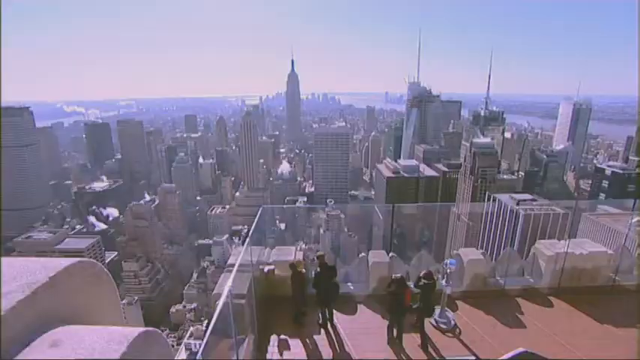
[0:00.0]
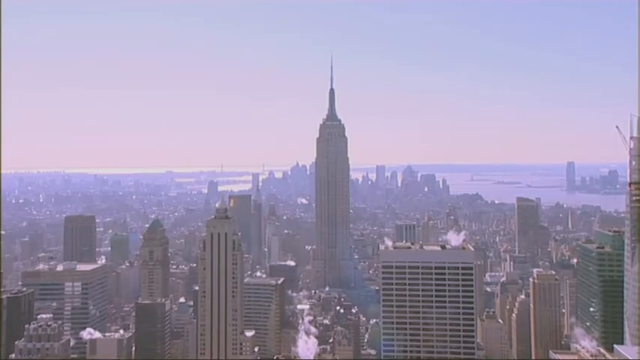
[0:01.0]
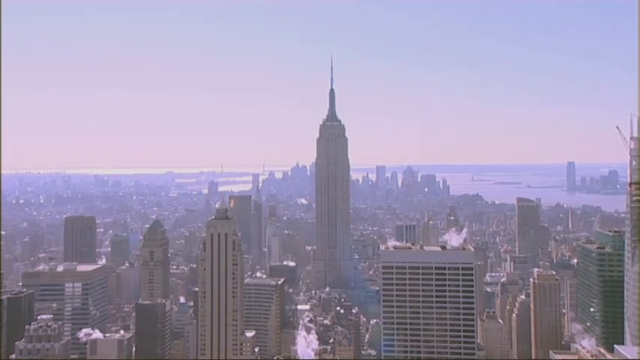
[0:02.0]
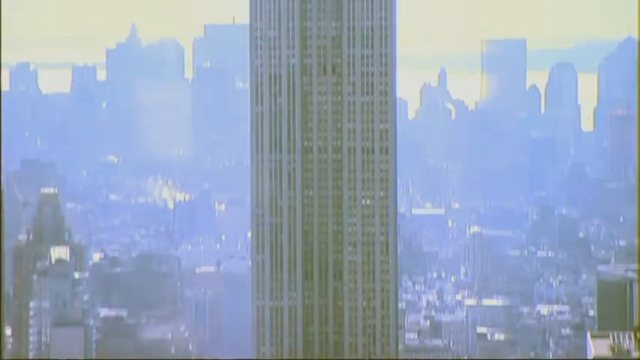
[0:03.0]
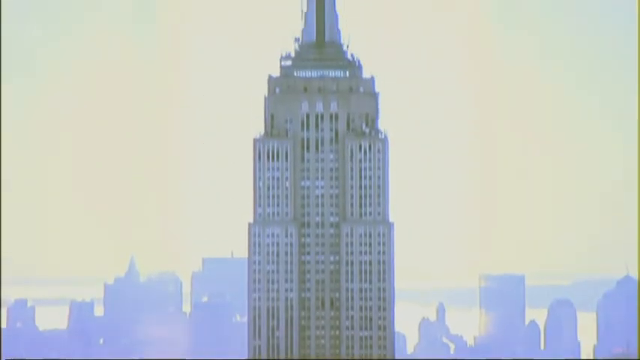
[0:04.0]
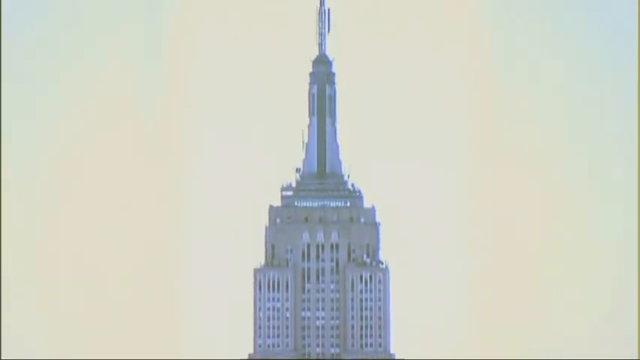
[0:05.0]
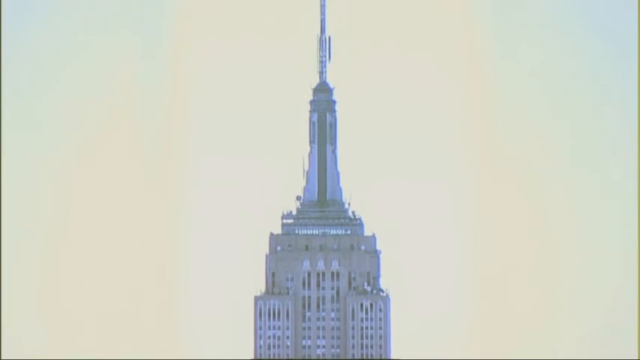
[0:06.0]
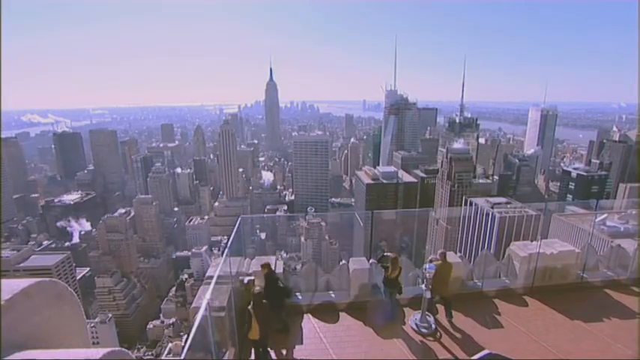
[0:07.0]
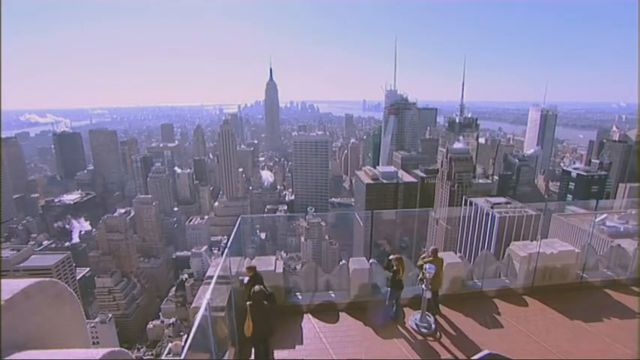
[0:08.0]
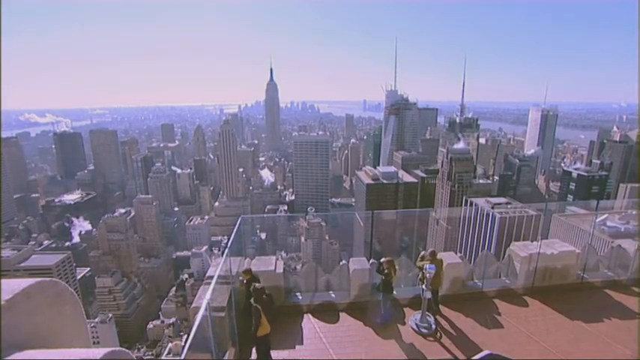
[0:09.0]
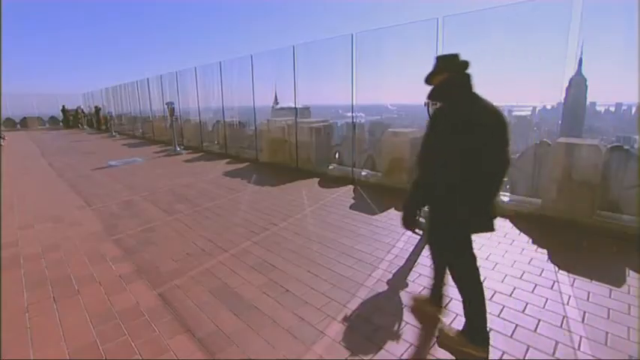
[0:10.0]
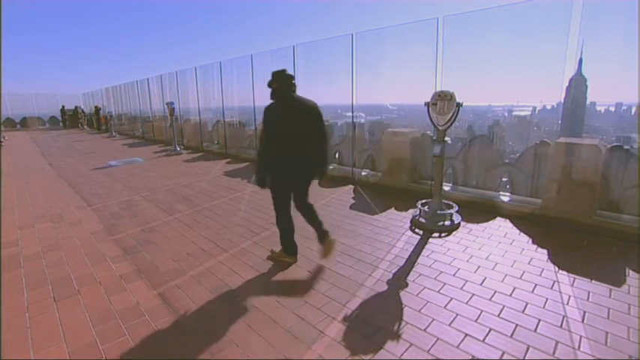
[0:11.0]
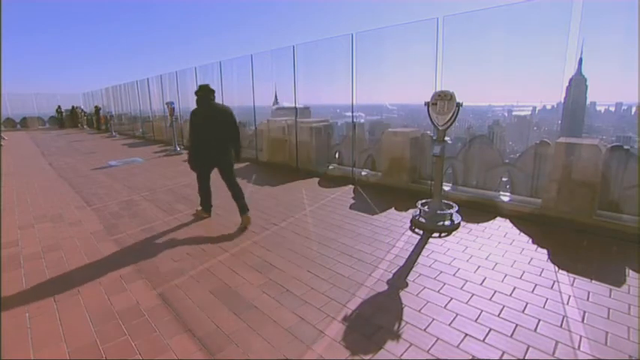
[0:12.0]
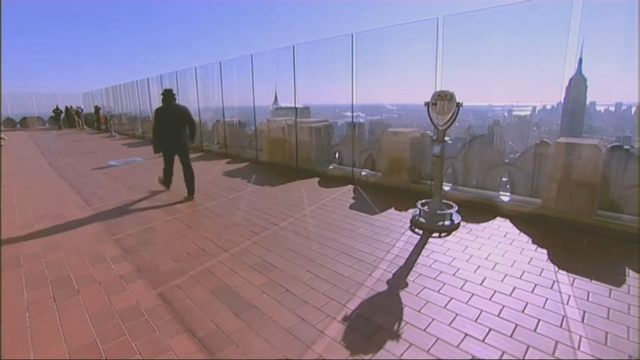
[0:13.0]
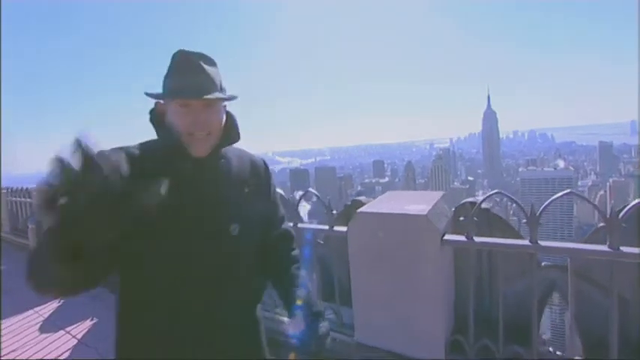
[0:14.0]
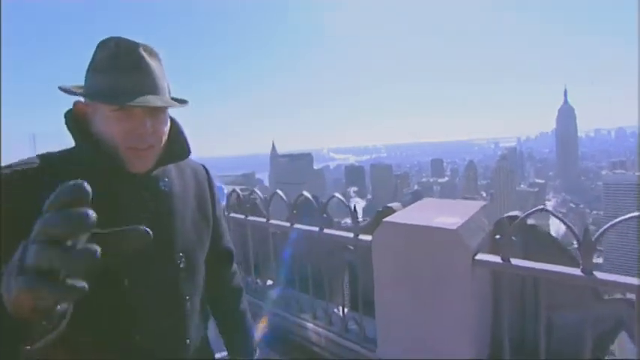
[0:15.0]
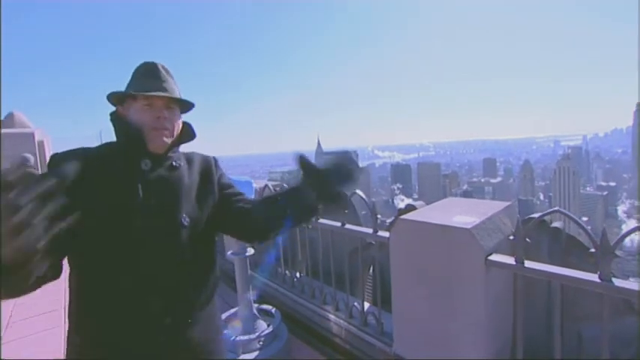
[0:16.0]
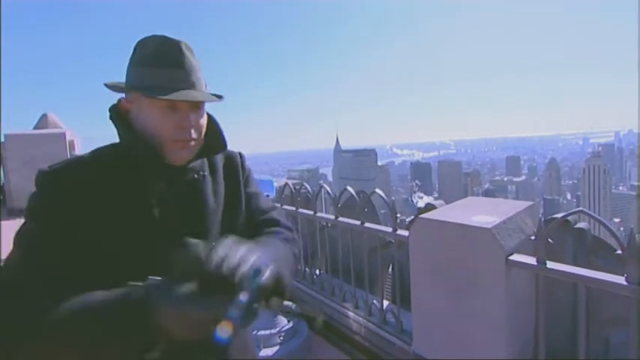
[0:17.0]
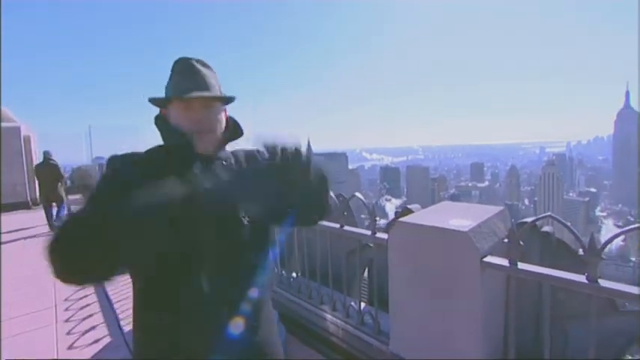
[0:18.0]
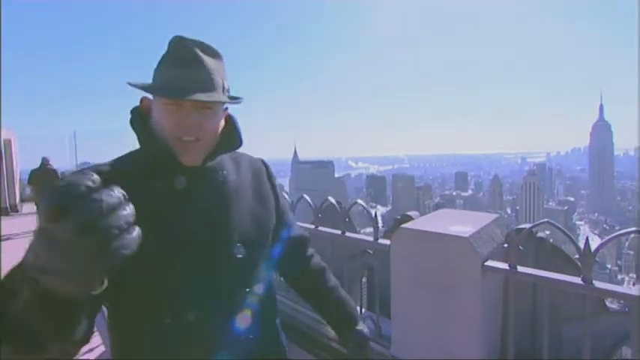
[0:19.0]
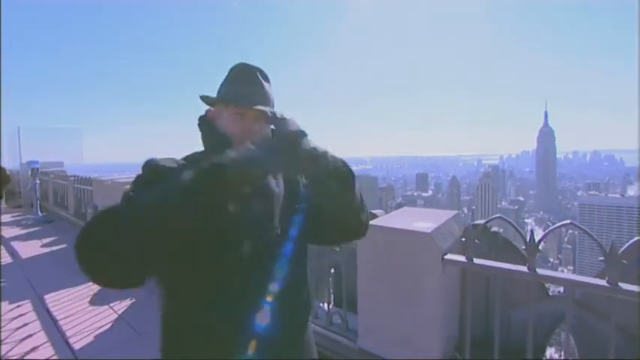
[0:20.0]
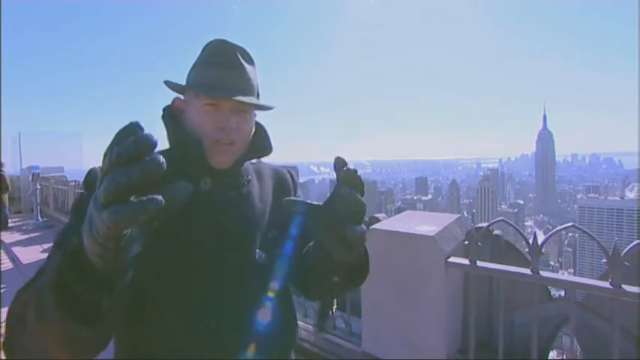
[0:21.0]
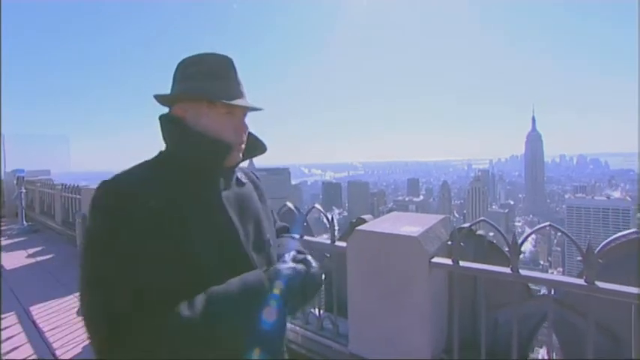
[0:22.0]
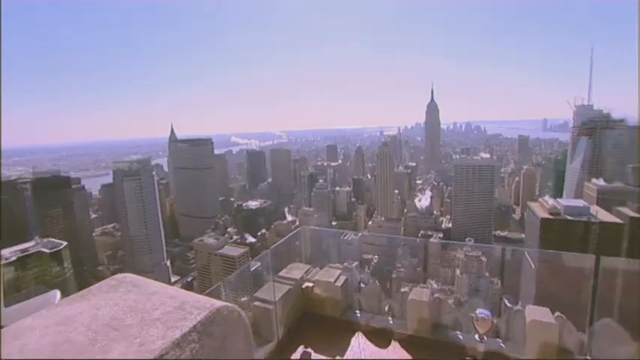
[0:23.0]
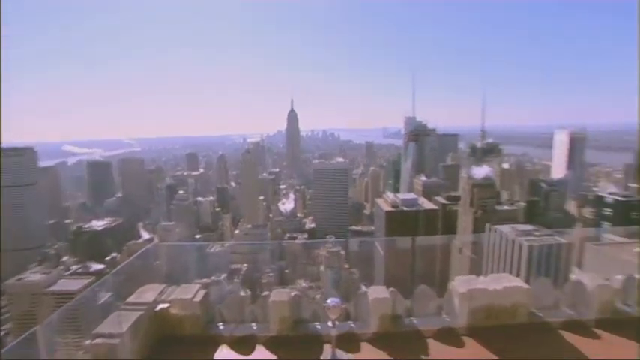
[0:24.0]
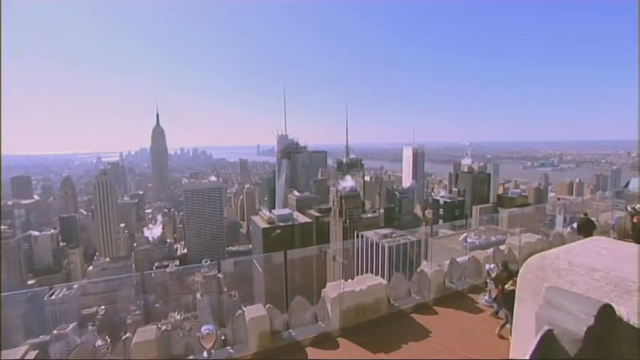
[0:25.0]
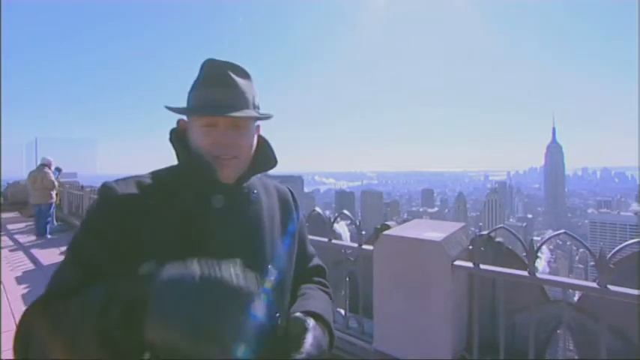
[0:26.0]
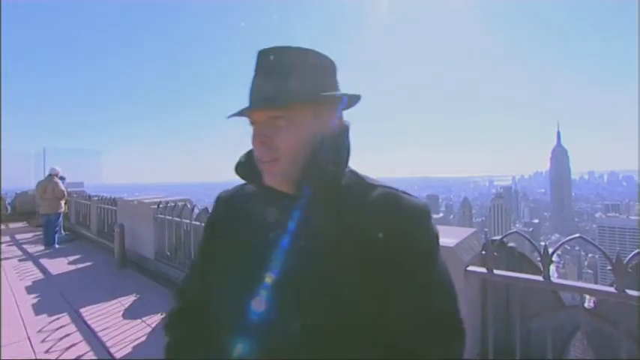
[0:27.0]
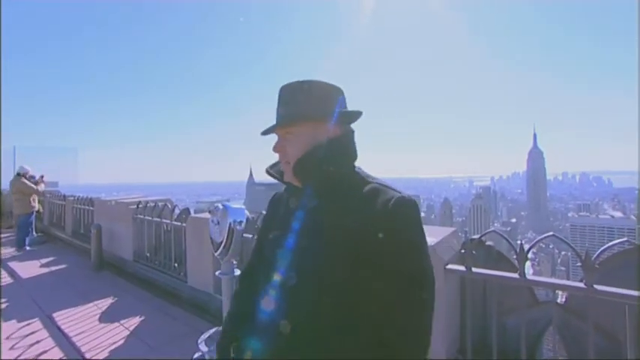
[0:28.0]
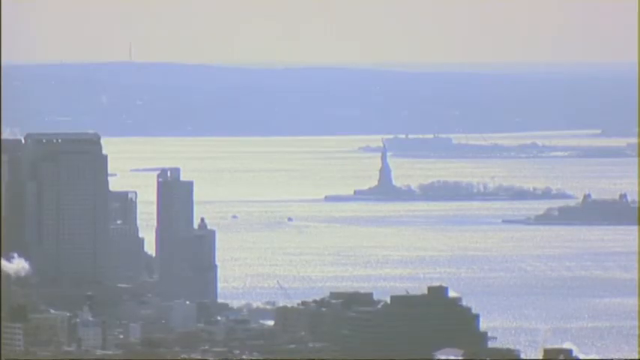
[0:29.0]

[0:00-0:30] The video opens on the New York City skyline, with the Empire State Building at its very center, flanked by other buildings. People are at the building's observation deck, looking out downtown and to the east, west and north. A man dressed in black, with a black coat, black pants and a black hat, points out different things that can be seen from the observation point. The view looking south extends all the way to the harbor.